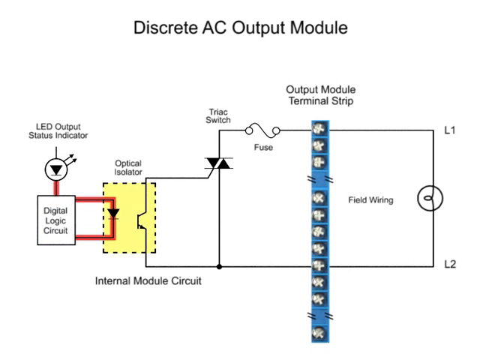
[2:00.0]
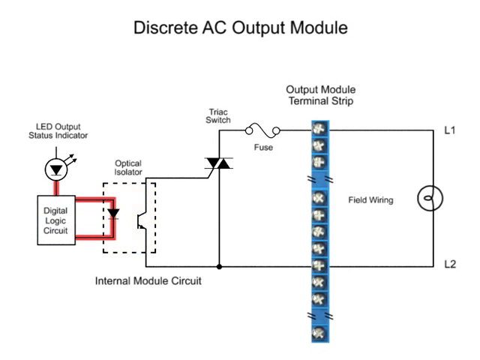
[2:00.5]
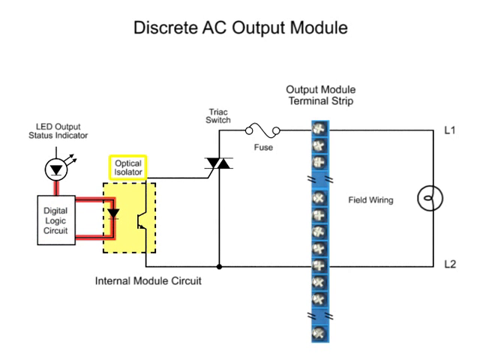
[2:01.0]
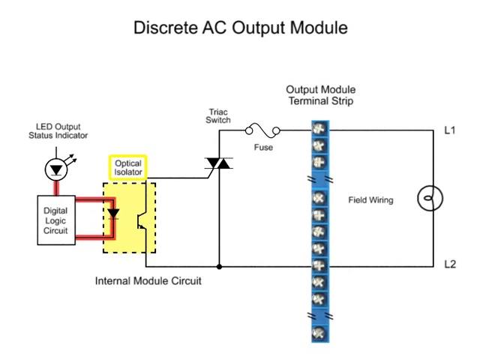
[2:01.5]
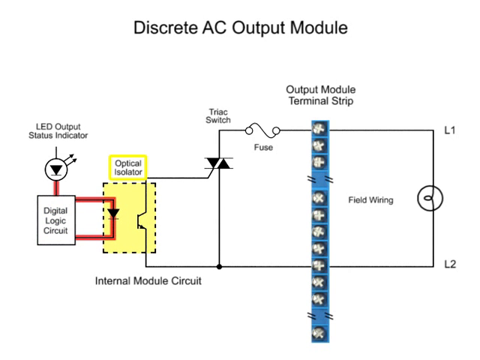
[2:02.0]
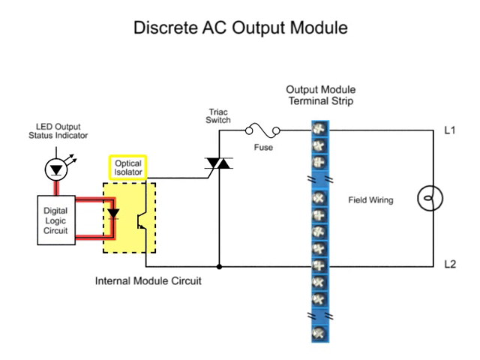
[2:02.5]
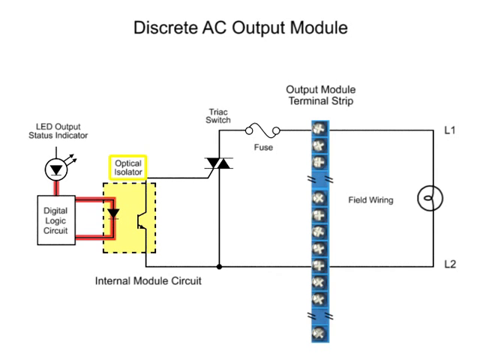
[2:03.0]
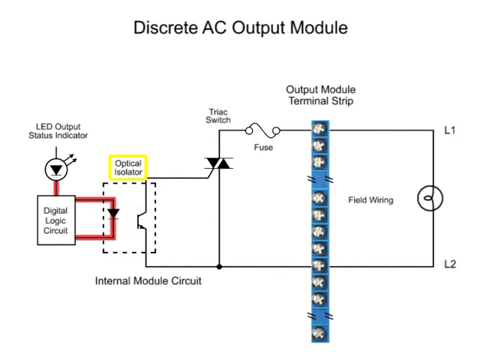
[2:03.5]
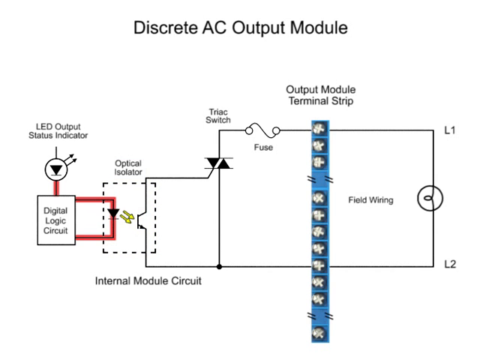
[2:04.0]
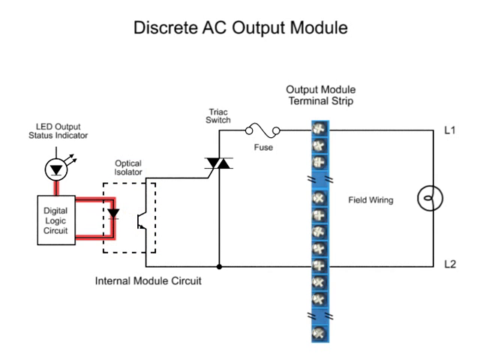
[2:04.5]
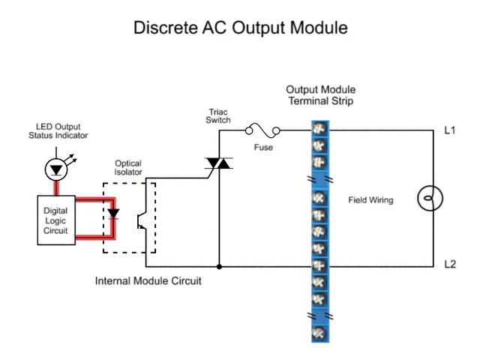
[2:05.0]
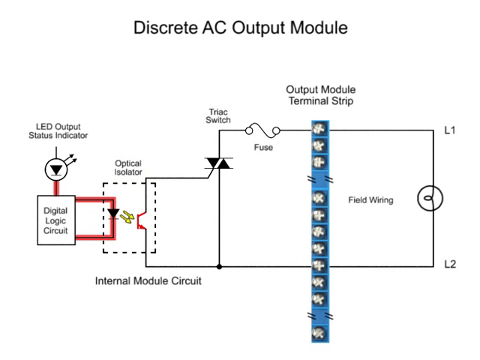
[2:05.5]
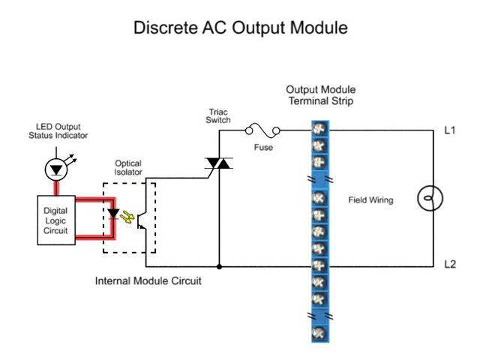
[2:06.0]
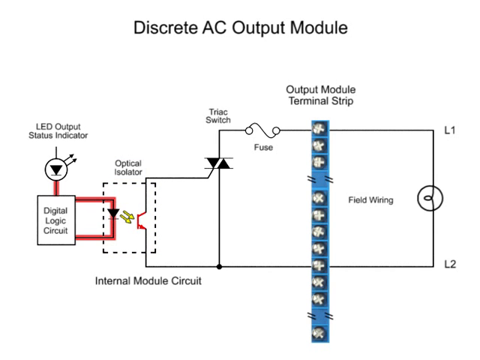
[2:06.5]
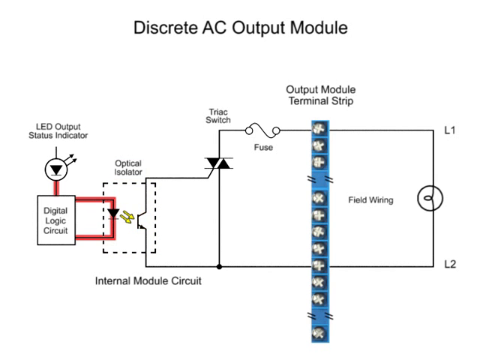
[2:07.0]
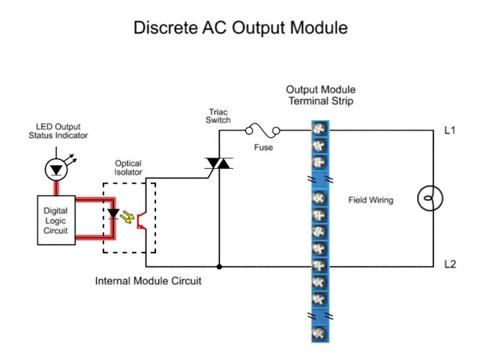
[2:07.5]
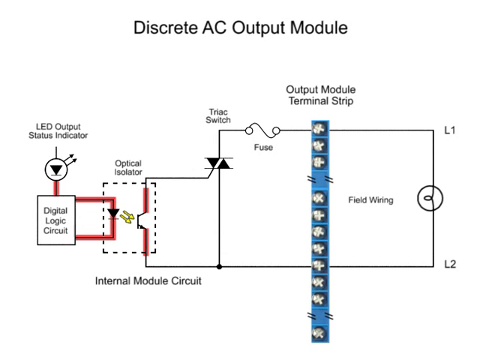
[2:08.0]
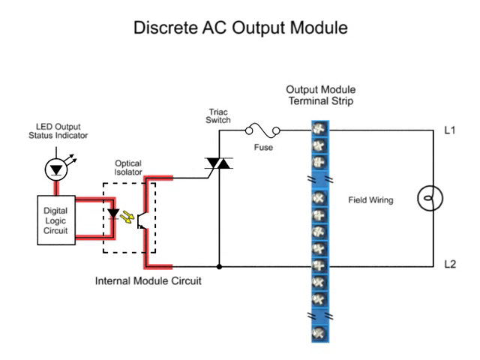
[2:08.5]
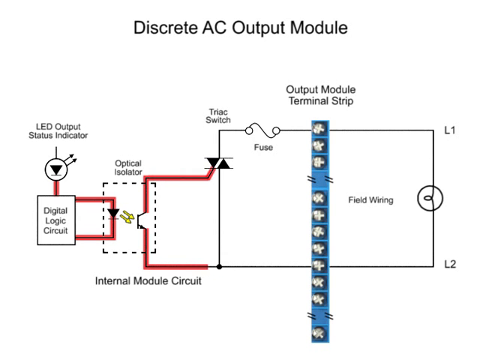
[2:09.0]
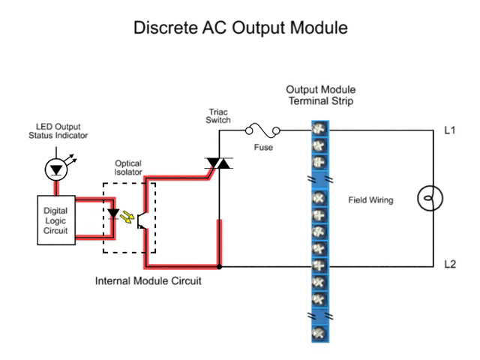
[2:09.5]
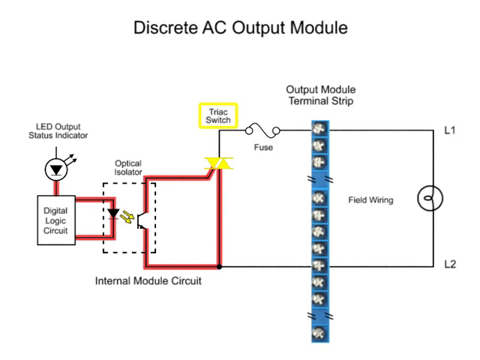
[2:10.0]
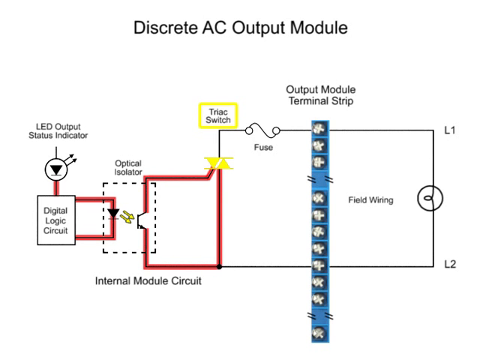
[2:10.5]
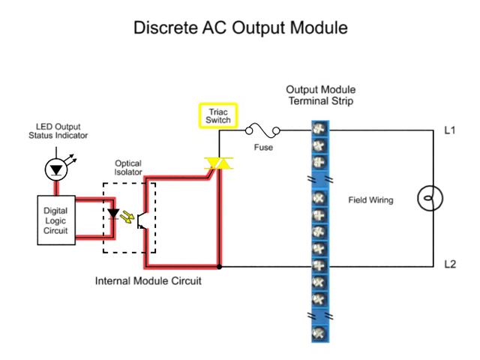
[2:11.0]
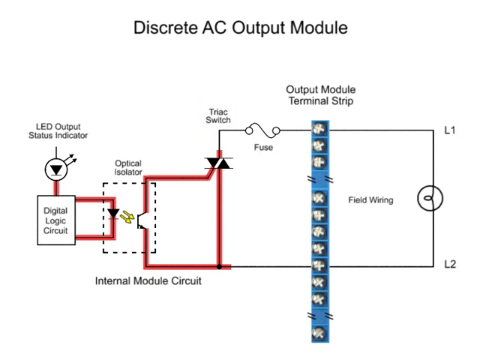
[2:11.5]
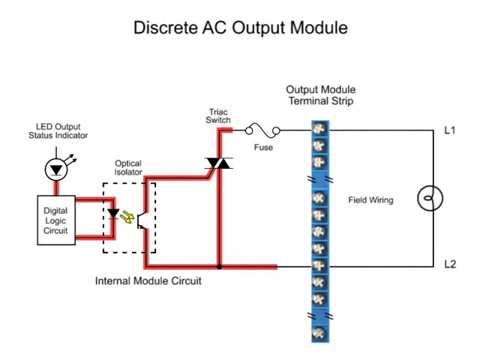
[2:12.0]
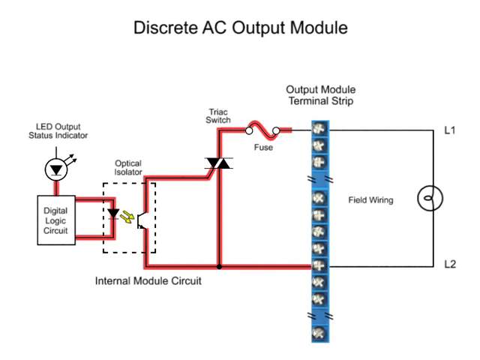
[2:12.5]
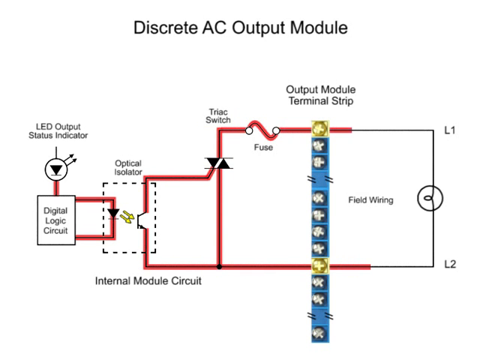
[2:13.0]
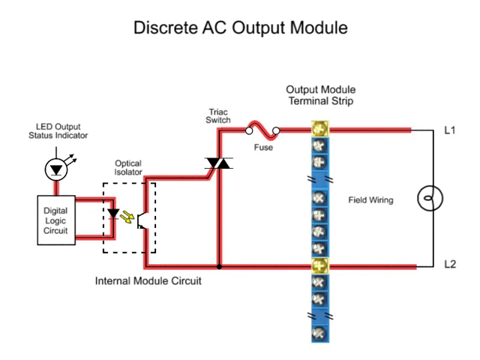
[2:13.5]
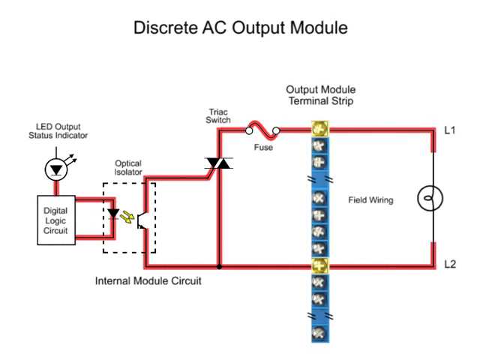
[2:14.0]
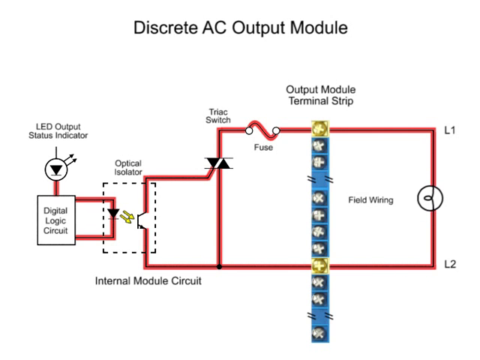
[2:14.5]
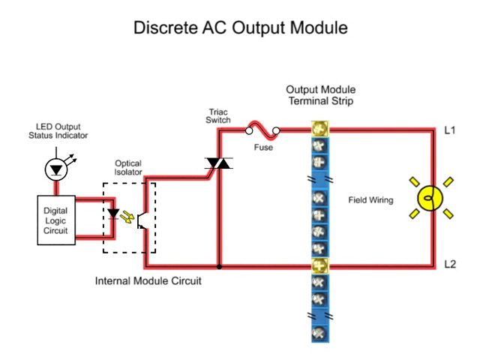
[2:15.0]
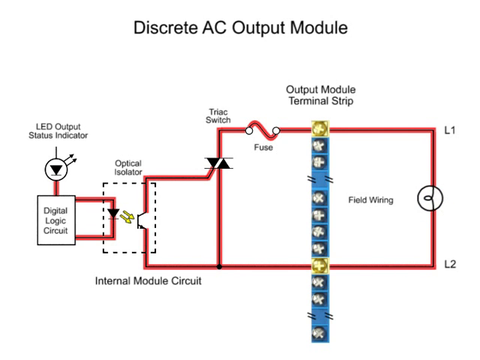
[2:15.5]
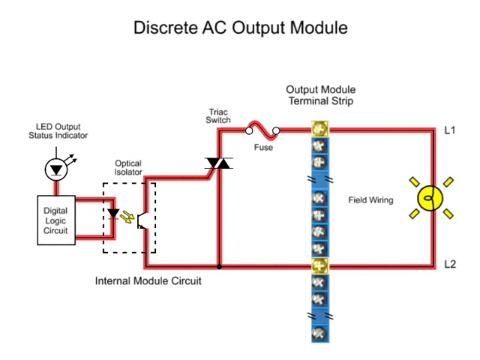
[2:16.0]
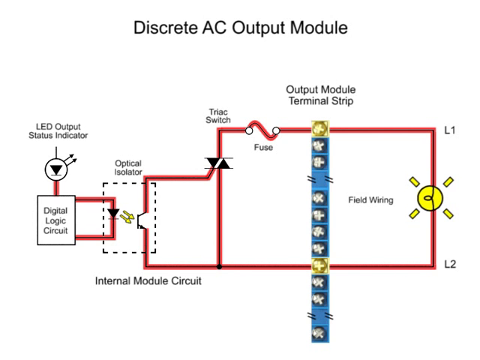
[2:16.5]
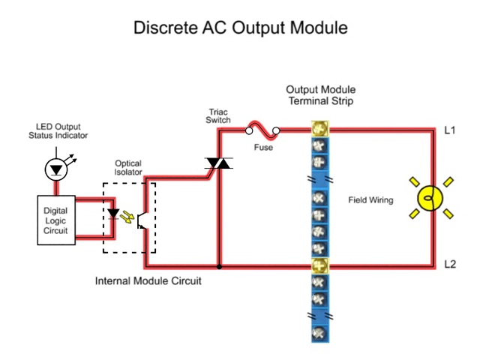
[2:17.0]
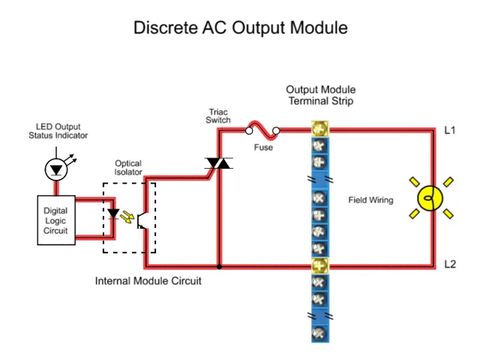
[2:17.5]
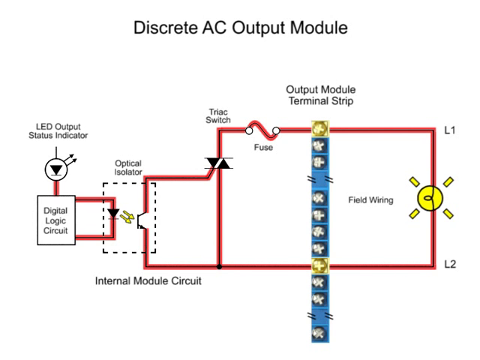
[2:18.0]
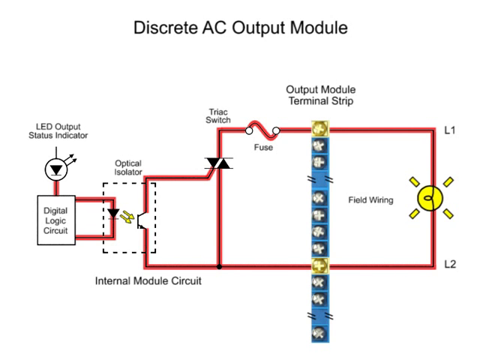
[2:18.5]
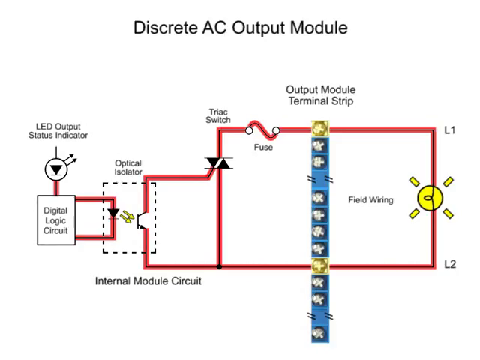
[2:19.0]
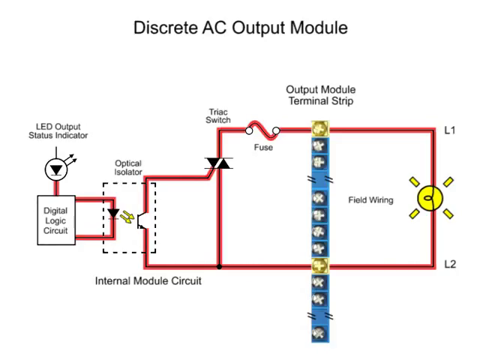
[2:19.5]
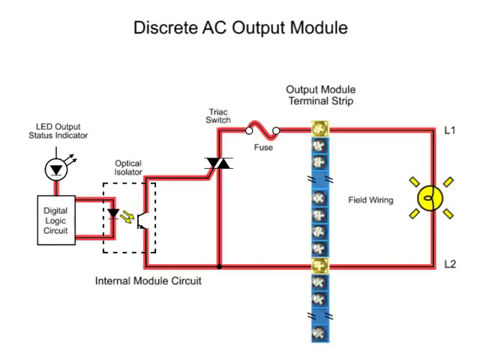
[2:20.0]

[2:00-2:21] Current is shown flowing from the digital logic circuit through the optical isolator and the internal module circuit to the triode switch, through the fuse, then through the field wiring to the output module terminal strip. Two of these show the current flowing through them. On the other side are L1 and L2, leading to the final lighting. This is the final part of the current flow through the discrete AC output, with the internal module circuit shown, and the end product, the lighting, is displayed once the circuit is complete.